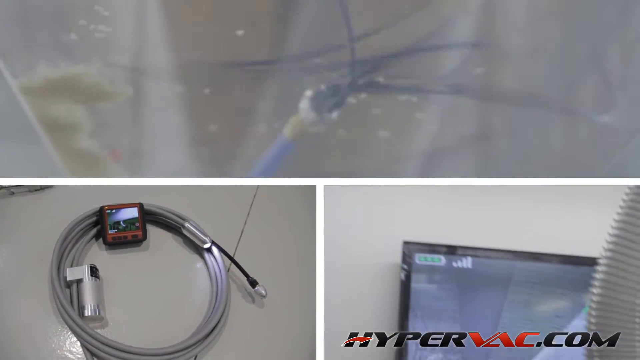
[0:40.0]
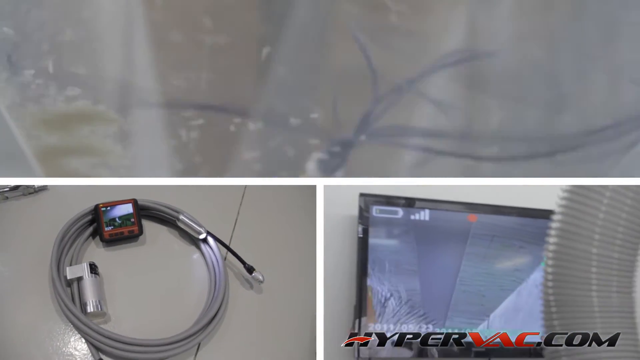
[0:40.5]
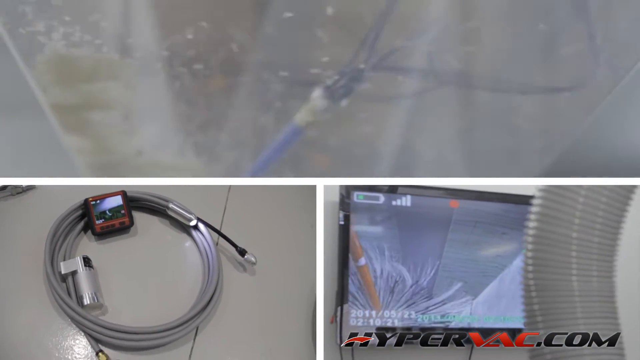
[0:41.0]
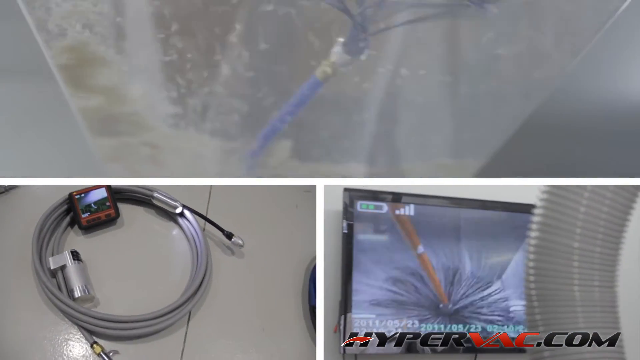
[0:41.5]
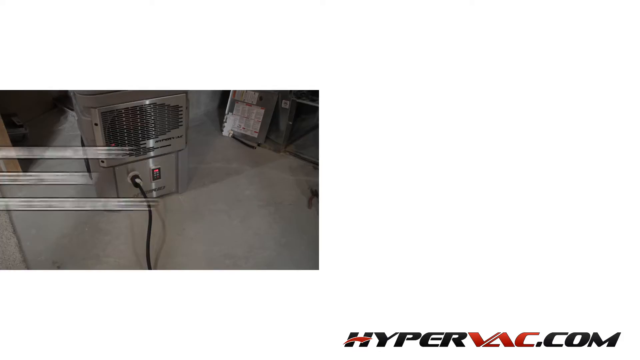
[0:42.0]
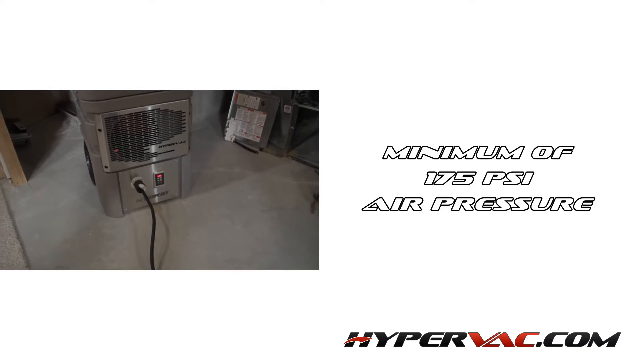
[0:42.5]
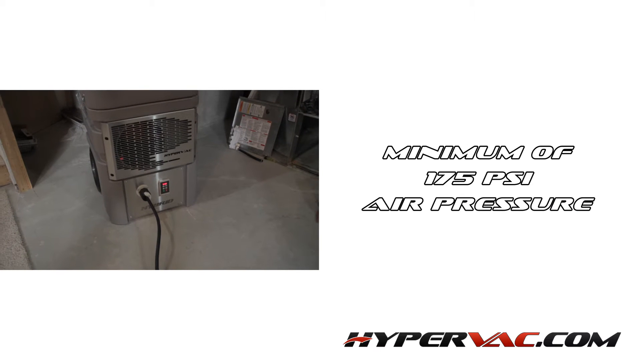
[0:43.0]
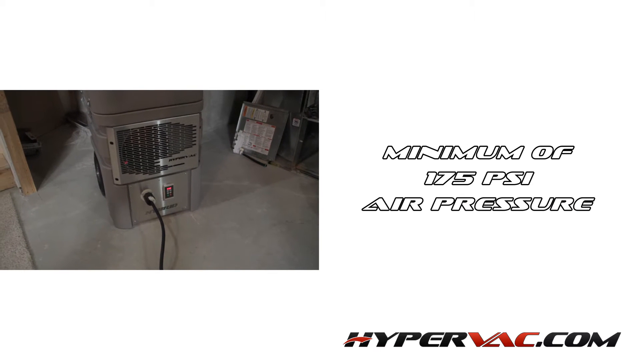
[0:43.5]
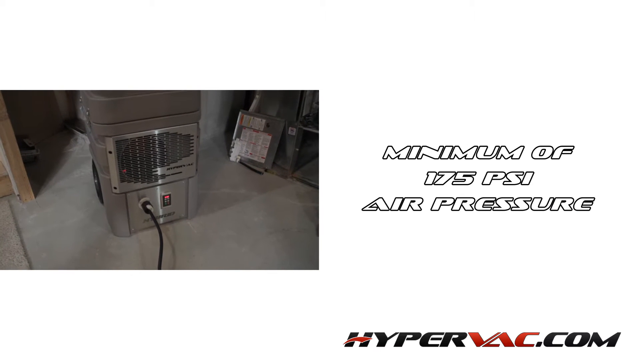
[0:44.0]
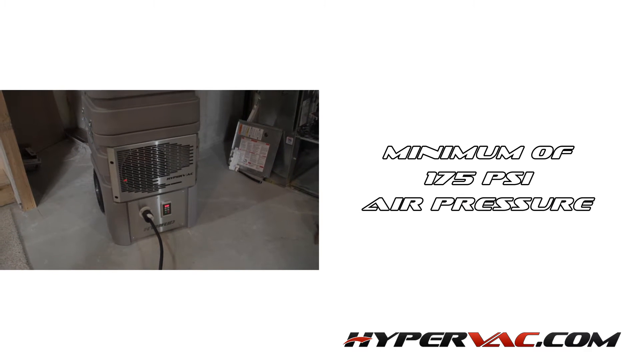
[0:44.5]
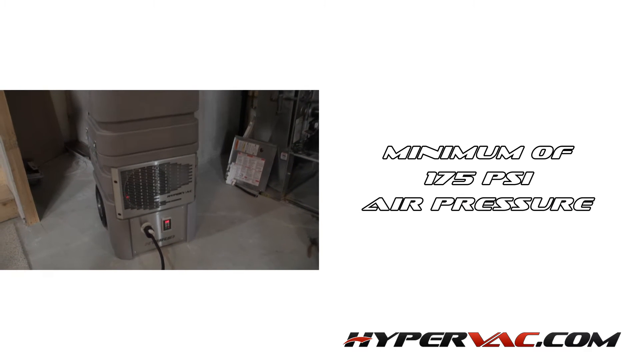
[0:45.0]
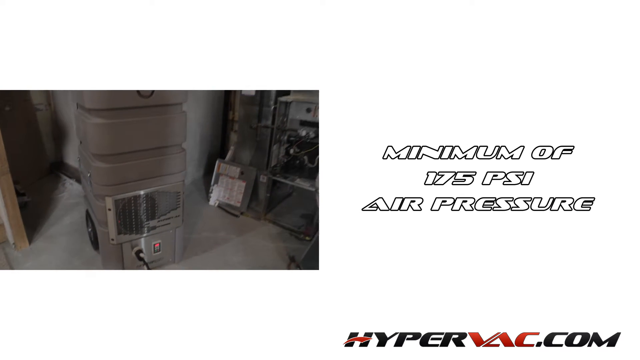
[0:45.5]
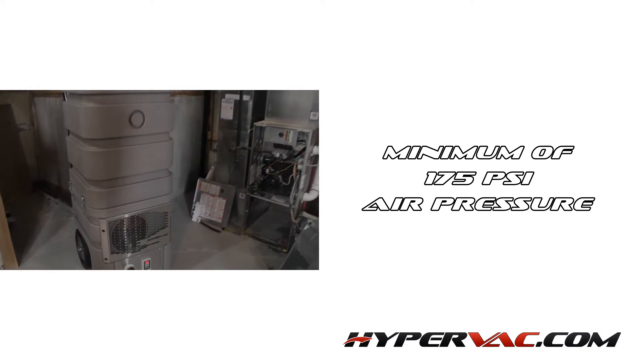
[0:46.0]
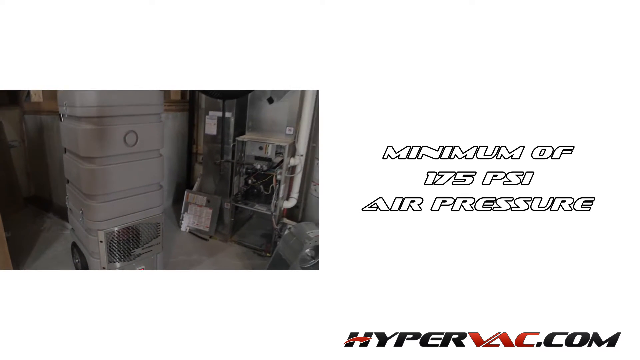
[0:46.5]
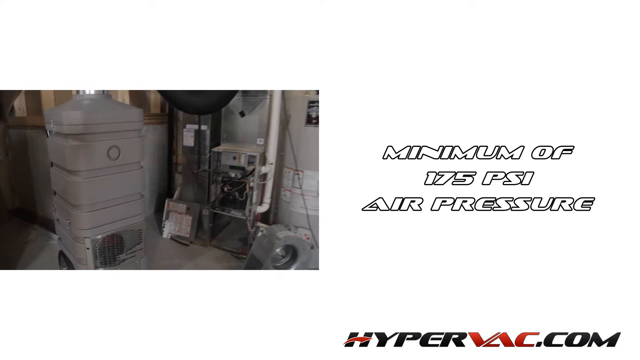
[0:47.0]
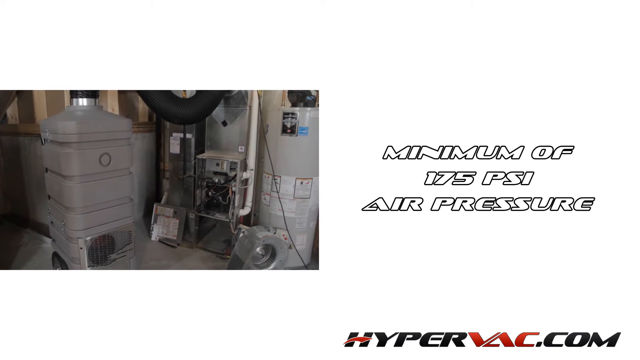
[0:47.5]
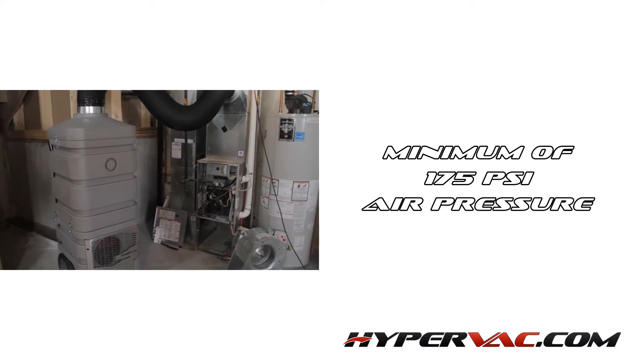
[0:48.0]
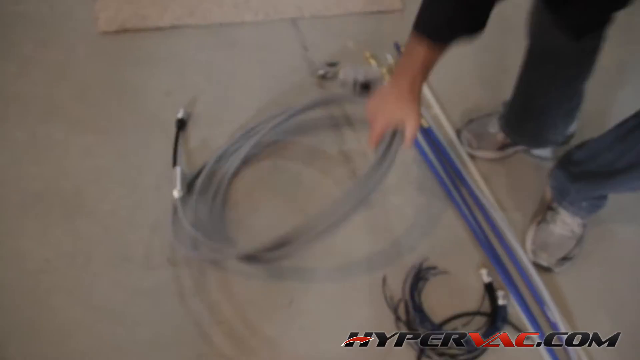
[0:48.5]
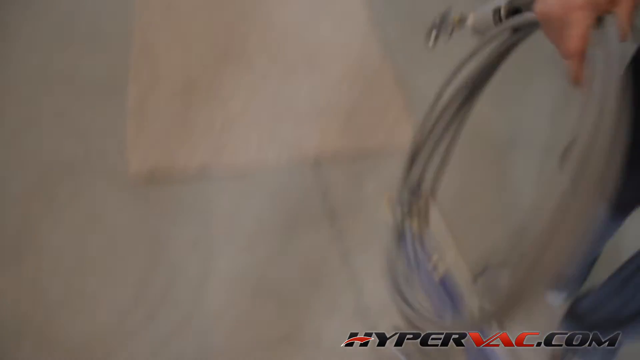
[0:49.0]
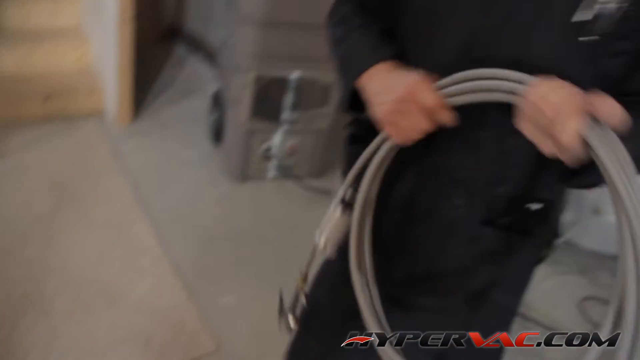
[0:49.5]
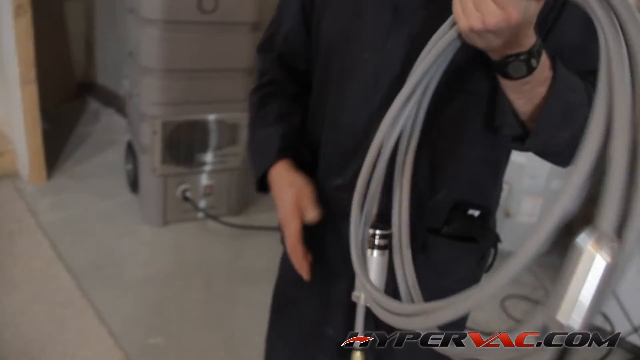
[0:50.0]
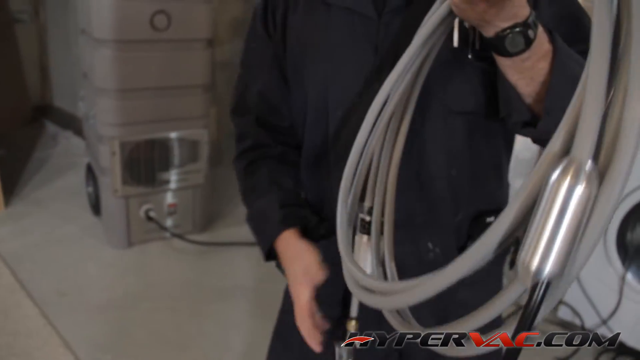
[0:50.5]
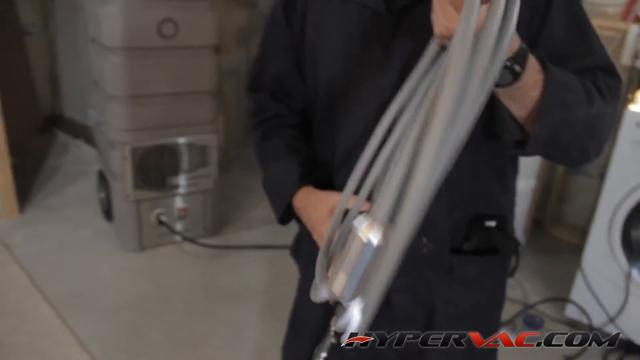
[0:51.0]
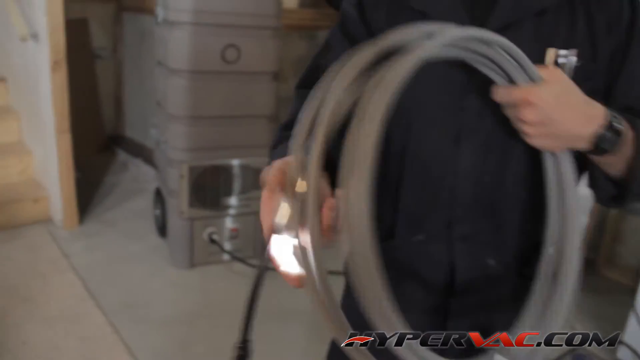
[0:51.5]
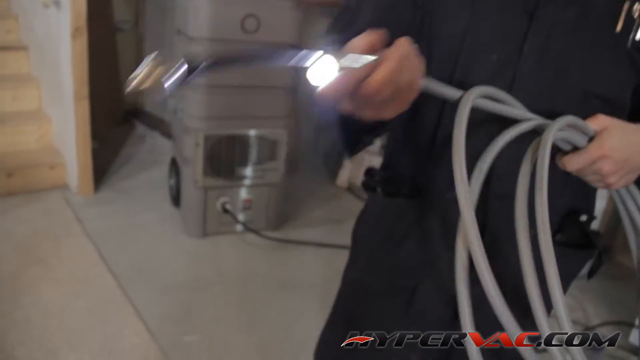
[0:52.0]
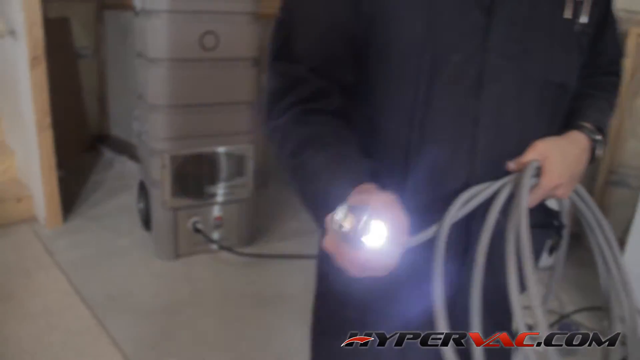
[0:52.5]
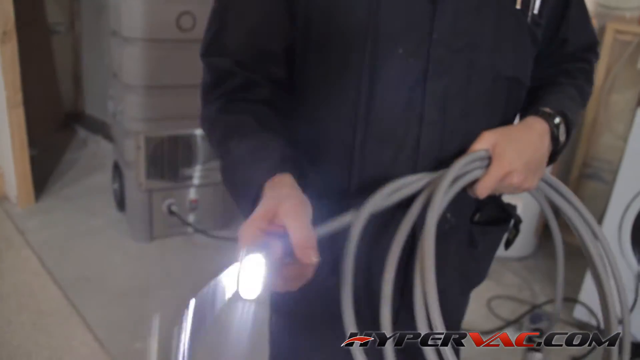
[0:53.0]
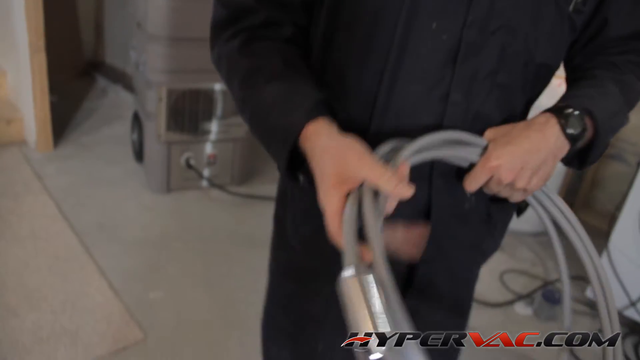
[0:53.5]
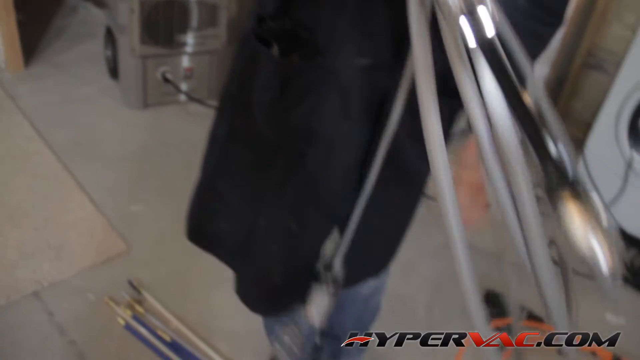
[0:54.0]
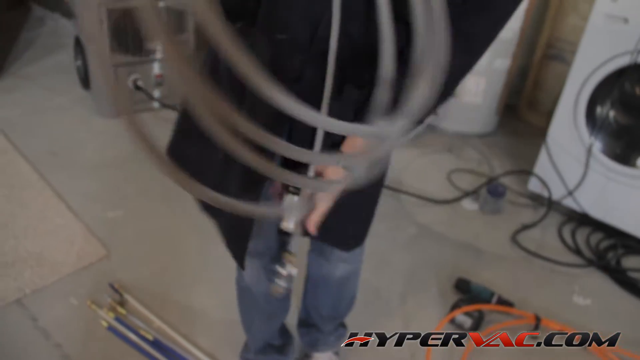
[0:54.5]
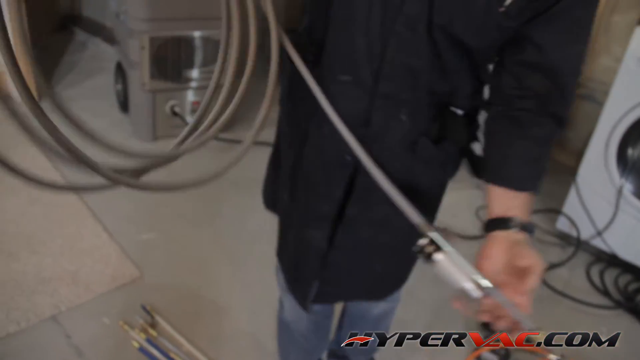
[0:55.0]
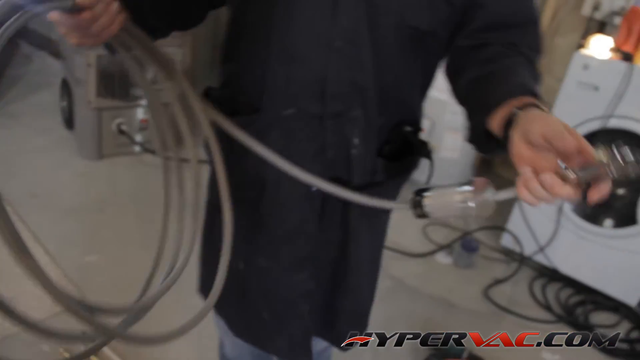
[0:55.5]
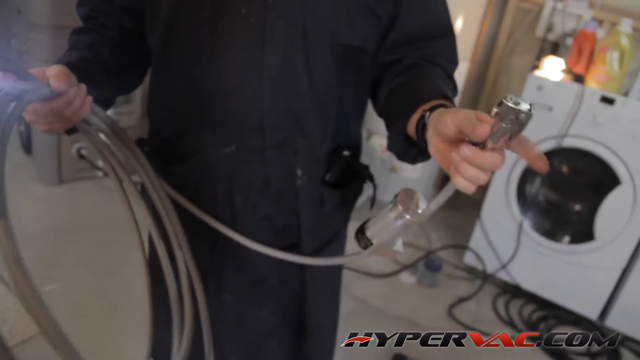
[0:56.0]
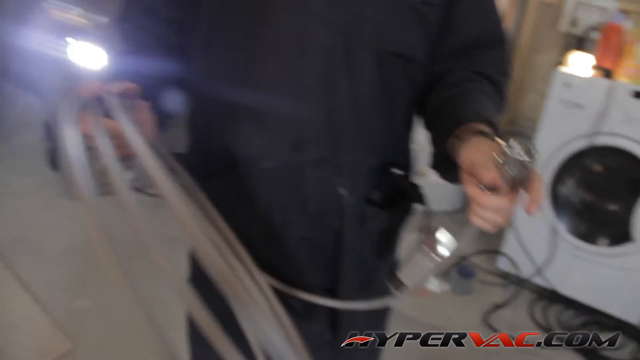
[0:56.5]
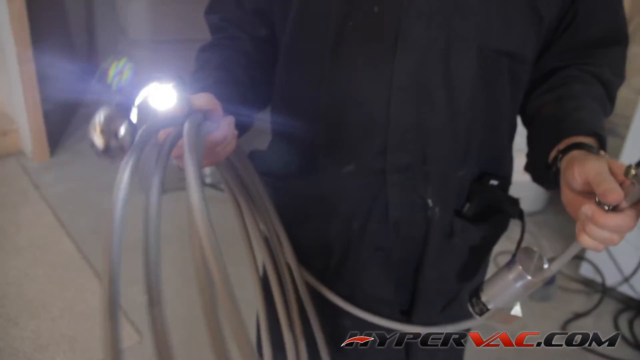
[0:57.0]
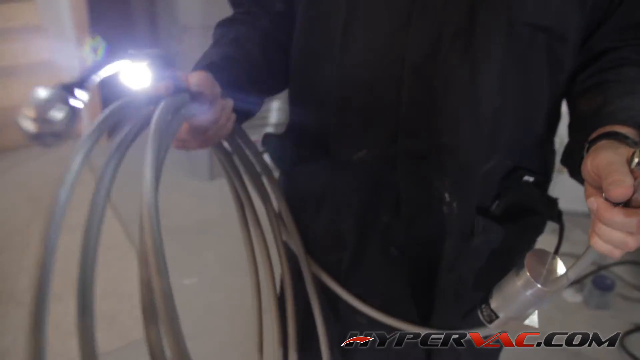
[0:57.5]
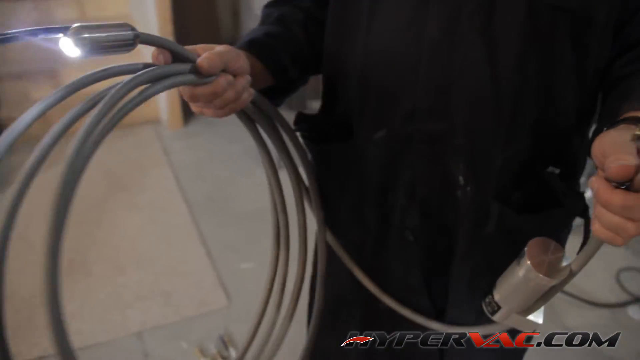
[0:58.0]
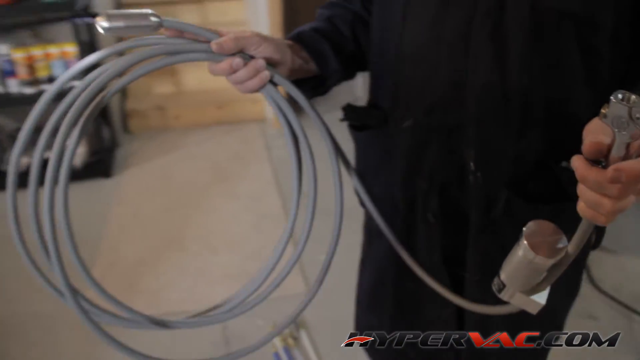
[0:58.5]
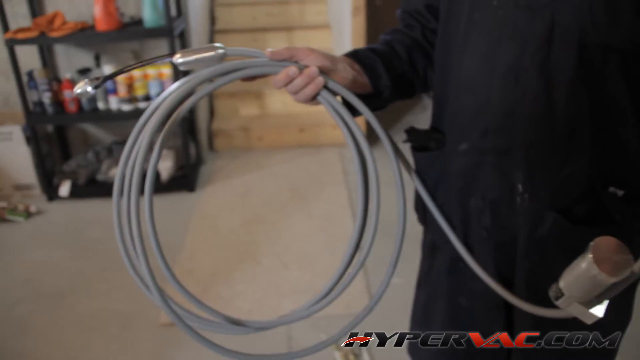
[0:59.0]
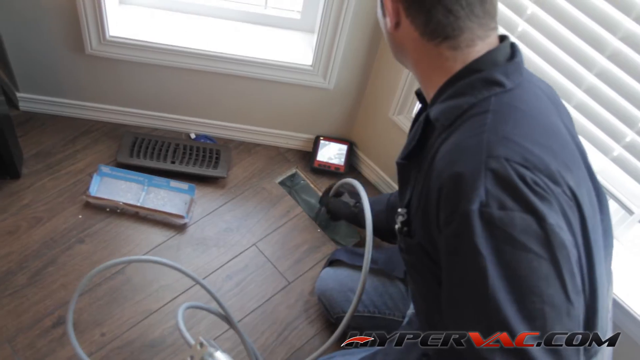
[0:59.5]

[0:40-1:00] Three different shots are displayed: on the bottom left there is a wire with some type of device on it, and on the bottom right a screen shows a camera being used. The video cuts to a shot with text on the right side reading "minimum of 175 psi air pressure," while the left side shows a machine with a plug in it and a very tall portion. The camera zooms away from it, revealing a large black tube on top of the device. Then the man in the black outfit holds some type of hose that looks like a device that can be plugged into something, with a camera and a light on its end. It is put into the vent area, apparently to get a clear view of the inside.